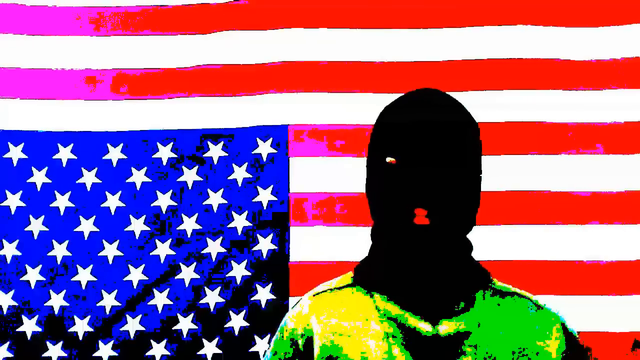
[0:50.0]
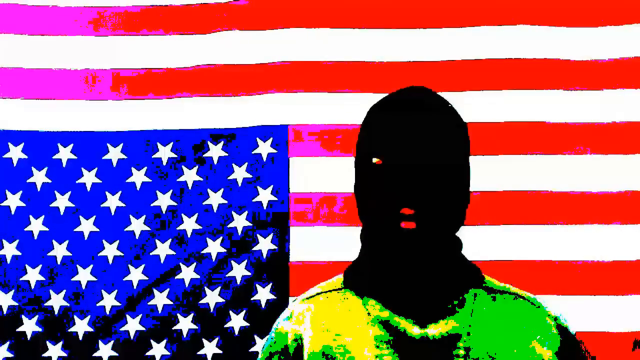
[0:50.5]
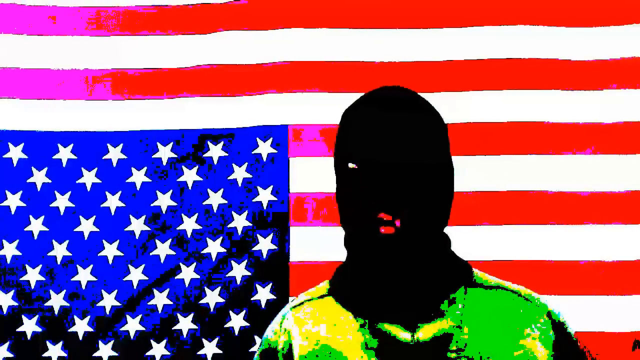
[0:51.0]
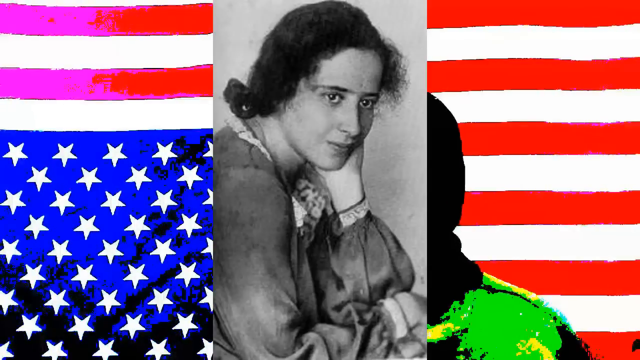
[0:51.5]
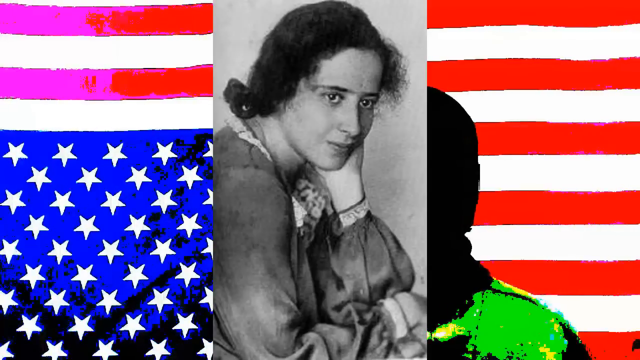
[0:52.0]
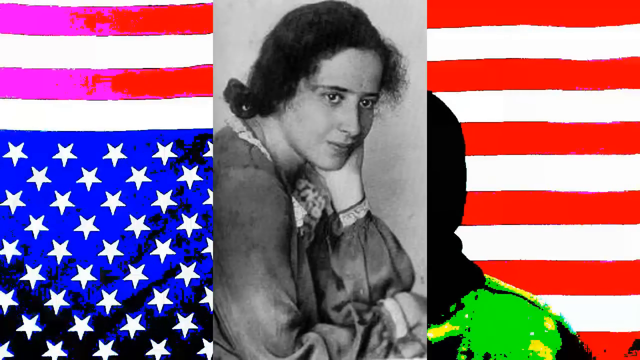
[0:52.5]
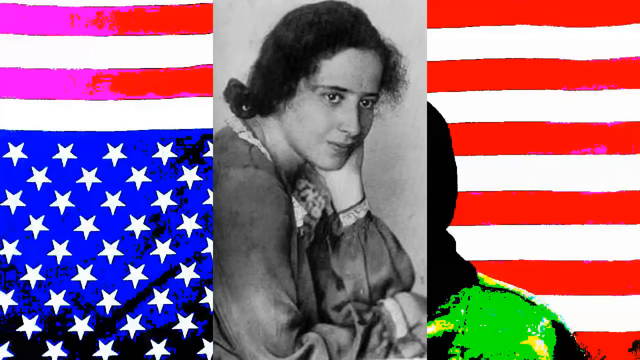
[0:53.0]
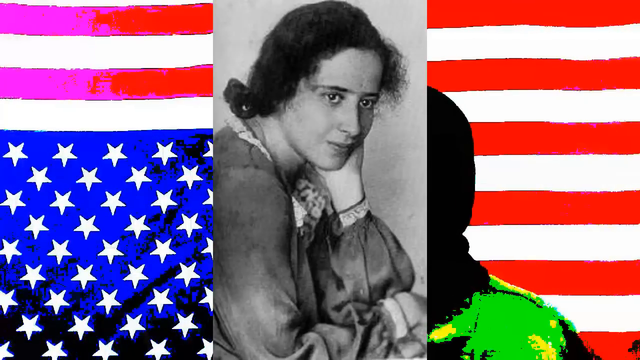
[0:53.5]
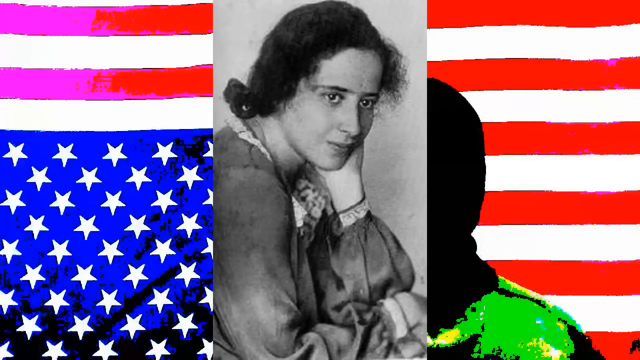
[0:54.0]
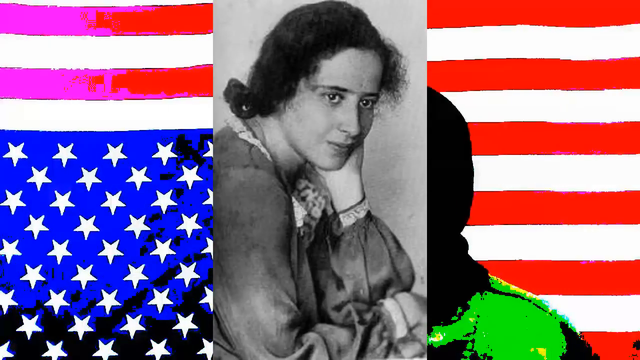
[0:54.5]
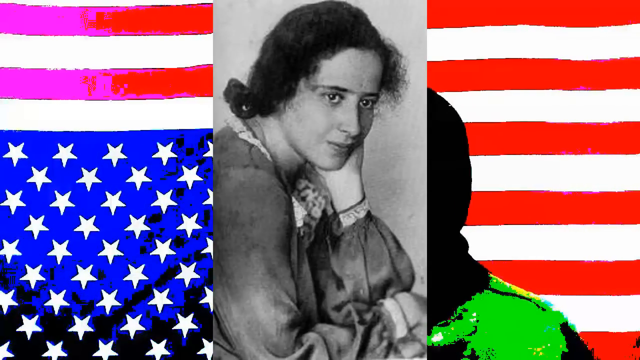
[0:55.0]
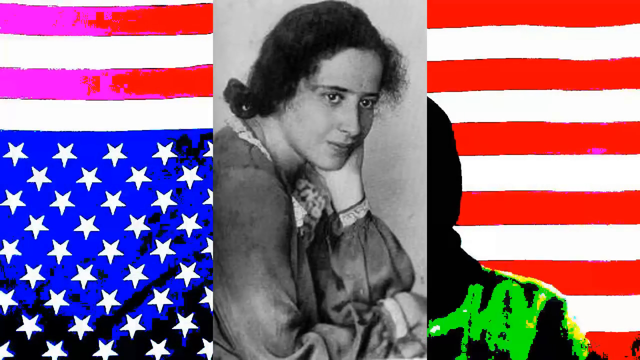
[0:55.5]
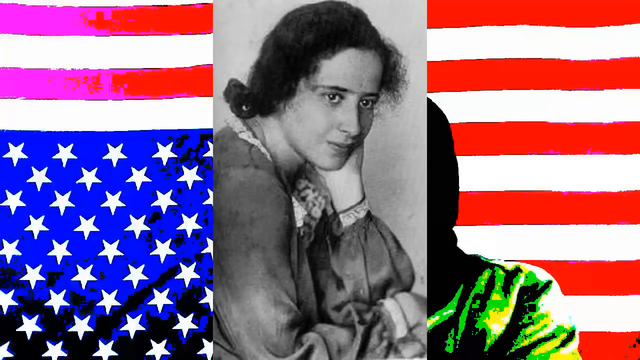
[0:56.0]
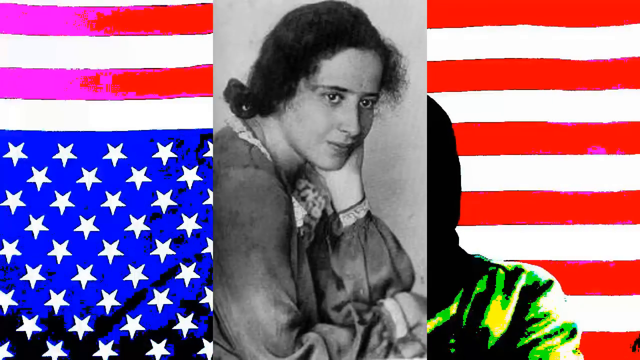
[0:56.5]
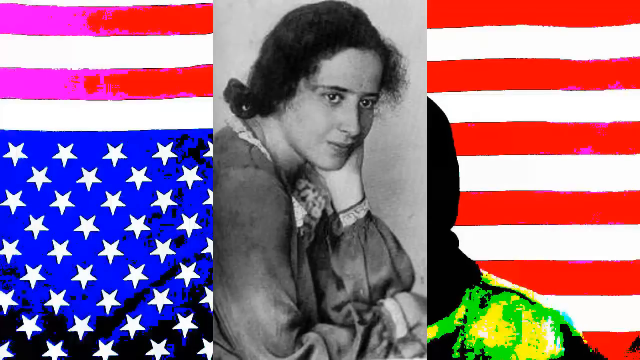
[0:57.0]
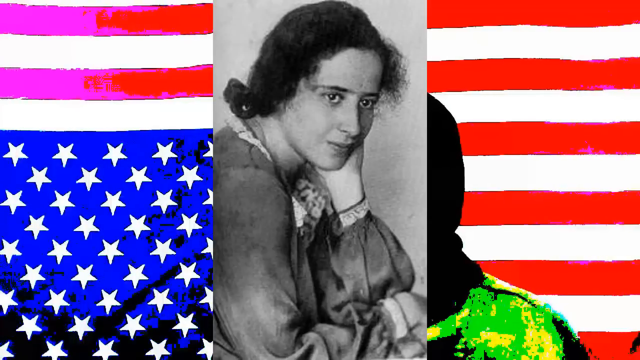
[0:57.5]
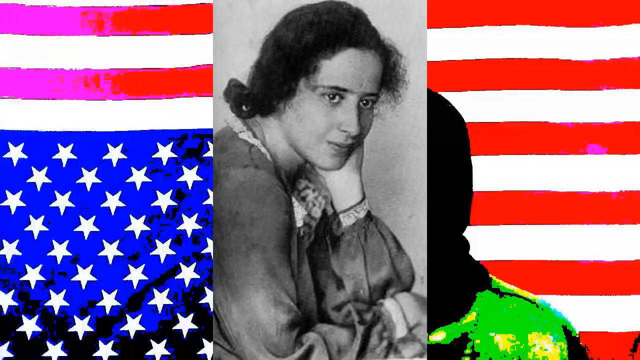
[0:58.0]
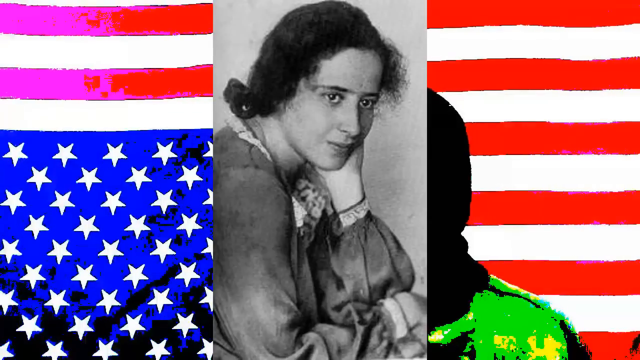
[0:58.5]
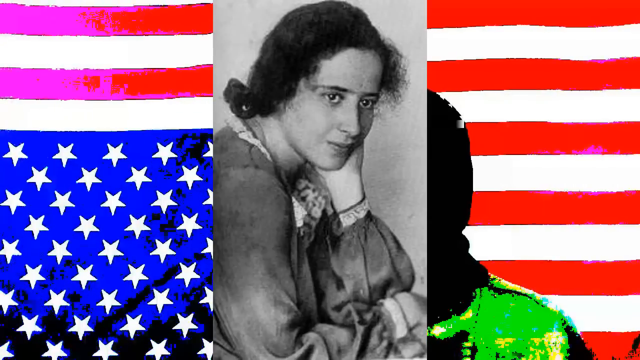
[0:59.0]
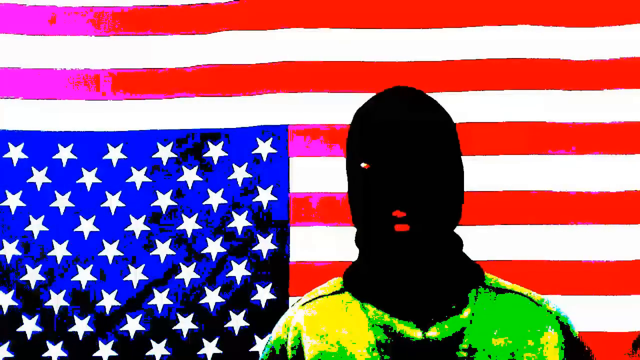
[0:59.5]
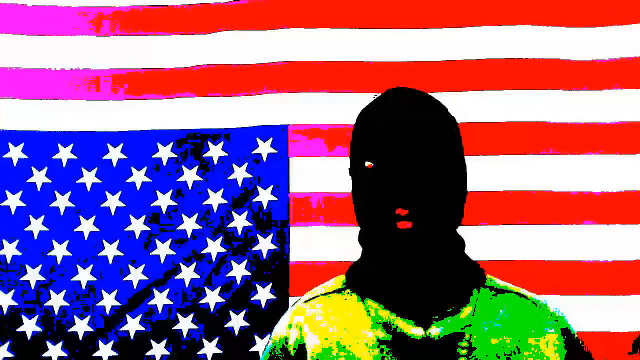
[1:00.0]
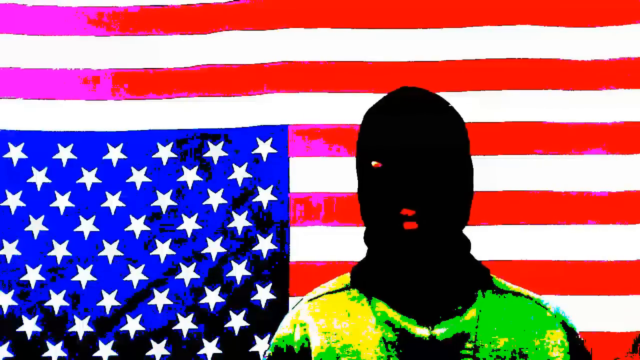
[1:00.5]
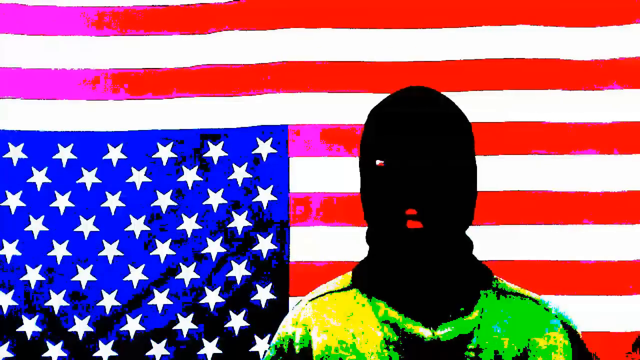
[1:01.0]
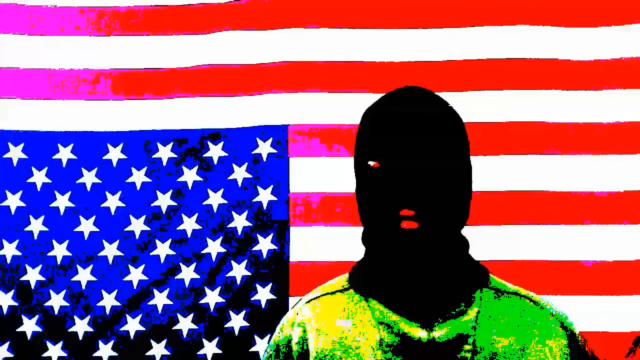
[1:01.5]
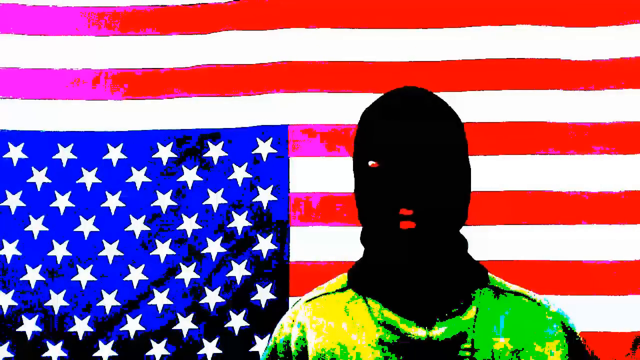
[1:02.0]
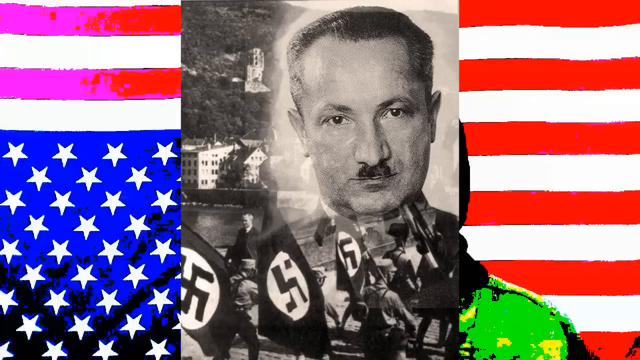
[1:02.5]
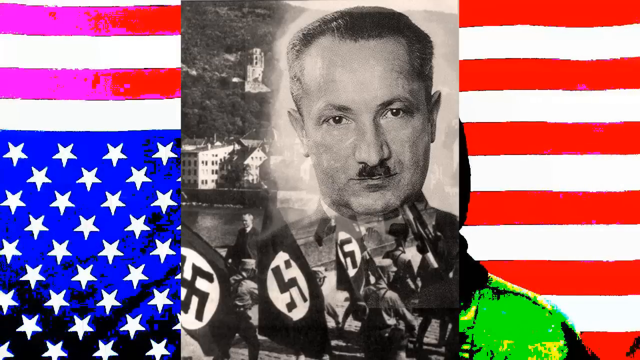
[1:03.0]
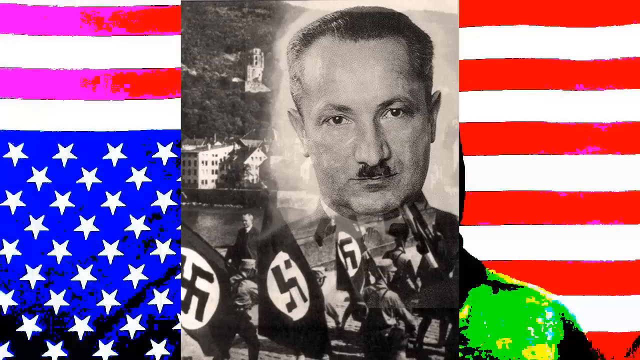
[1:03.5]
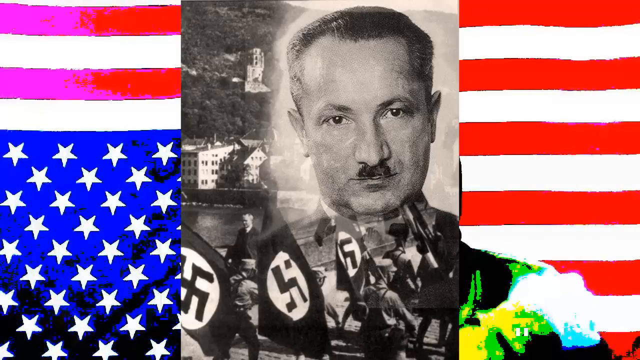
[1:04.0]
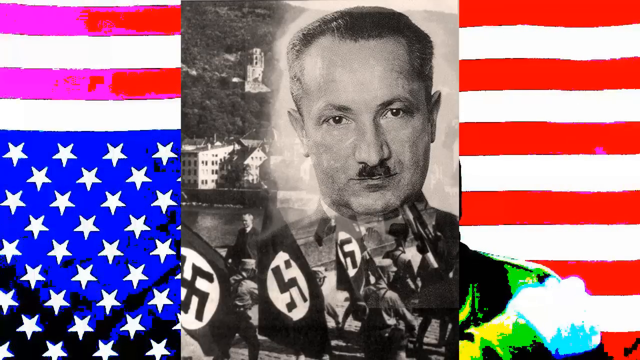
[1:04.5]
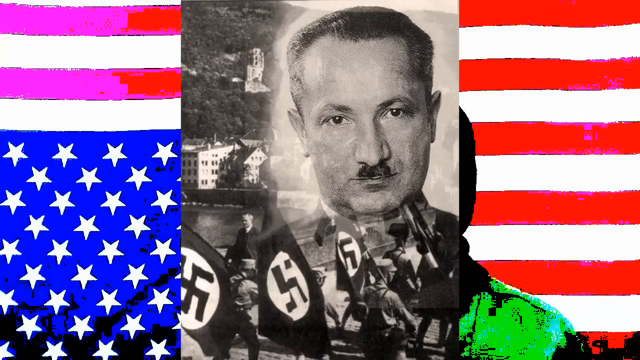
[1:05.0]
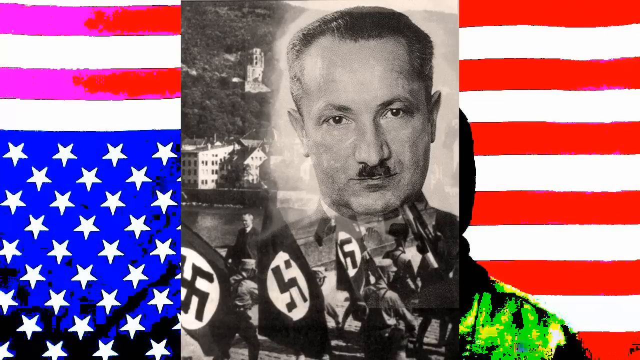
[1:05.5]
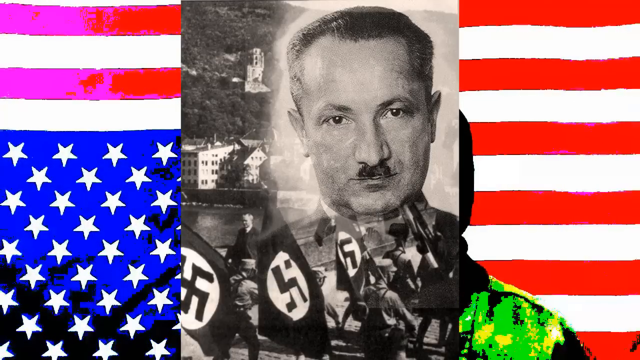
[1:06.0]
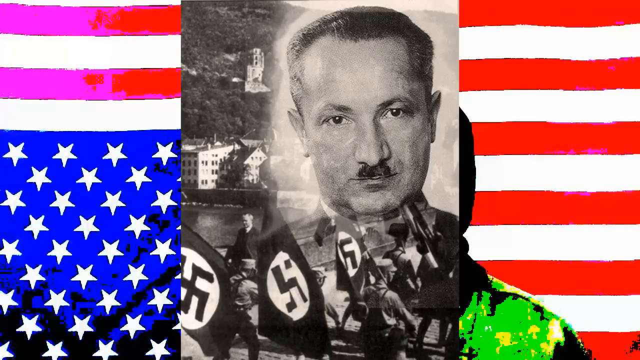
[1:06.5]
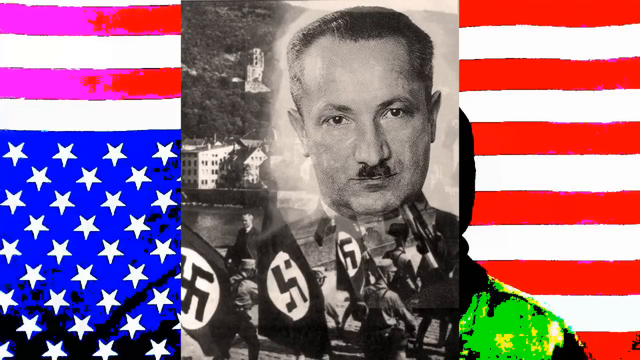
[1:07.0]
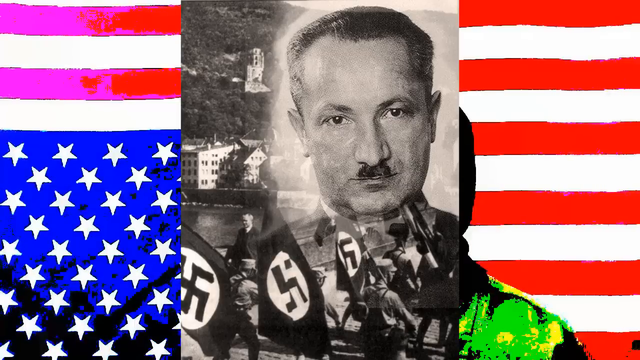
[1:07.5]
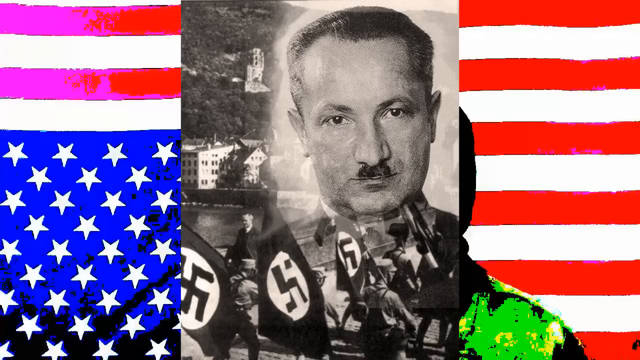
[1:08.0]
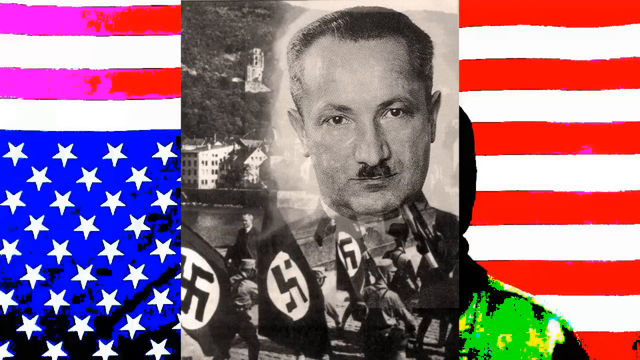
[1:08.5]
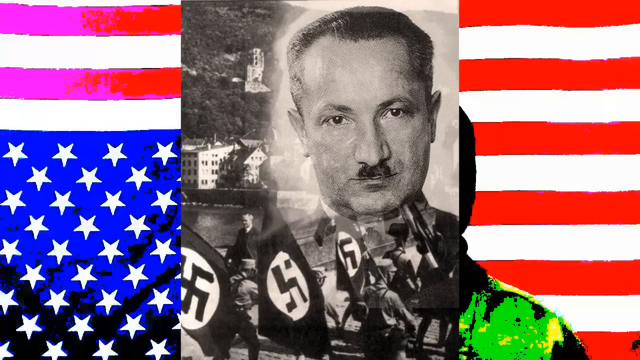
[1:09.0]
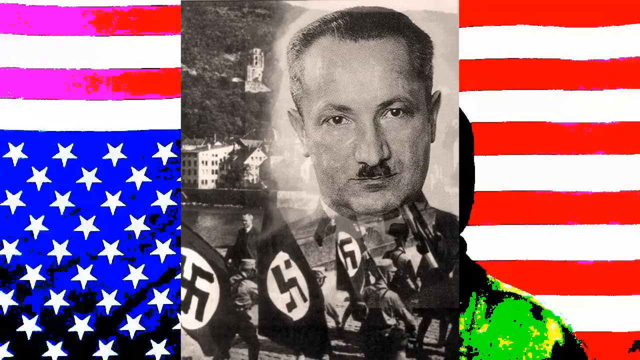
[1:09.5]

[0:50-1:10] The man in the black ski mask appears, his eyes and mouth visible, wearing a neon green shirt. Behind him is the upside-down American flag, whose colors on the left side of the image switch to different colors. Down at the center is a black-and-white photo of a woman with dark hair wearing a baggy shirt with adornment on the wrists and collar. The video then switches to a black-and-white image of a man with a Hitler mustache, superimposed on an image showing numerous Nazi flags near a lake. Further off in the background are houses or structures, including one that goes up onto the hill. The man in the black ski mask is seen in between the images and after them.